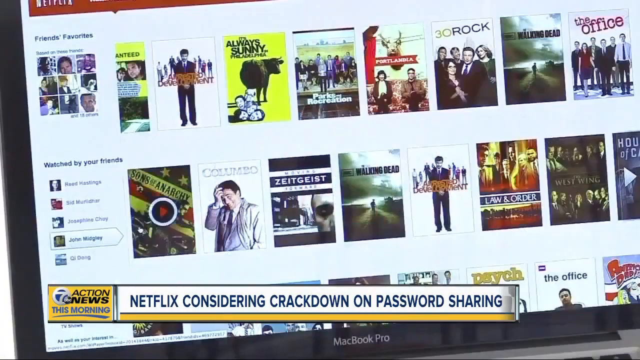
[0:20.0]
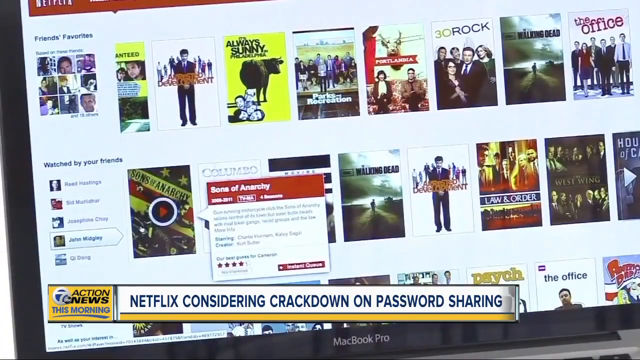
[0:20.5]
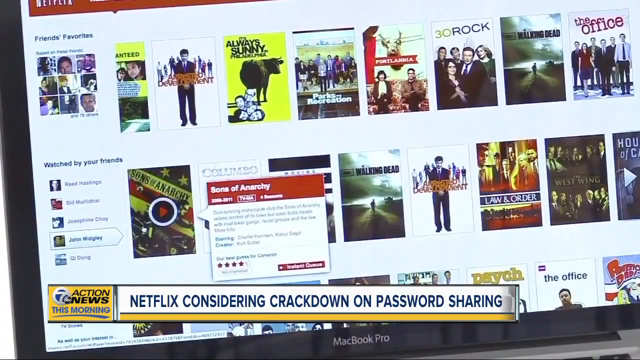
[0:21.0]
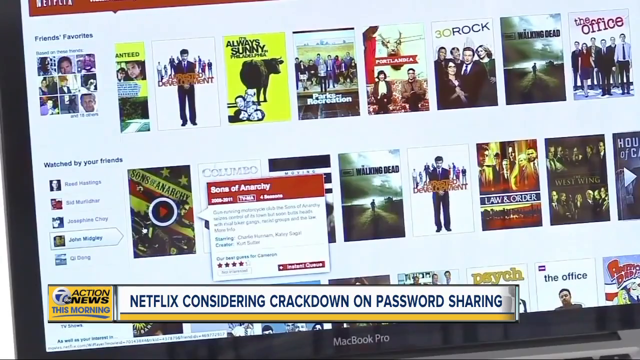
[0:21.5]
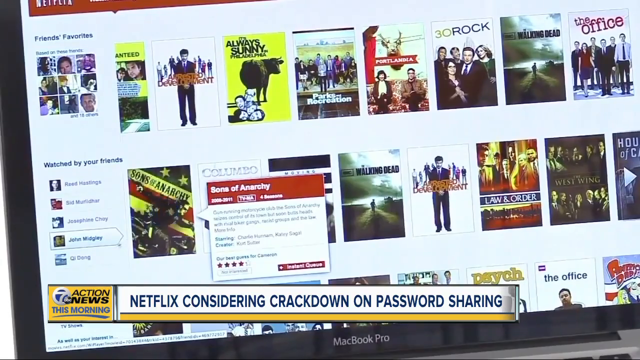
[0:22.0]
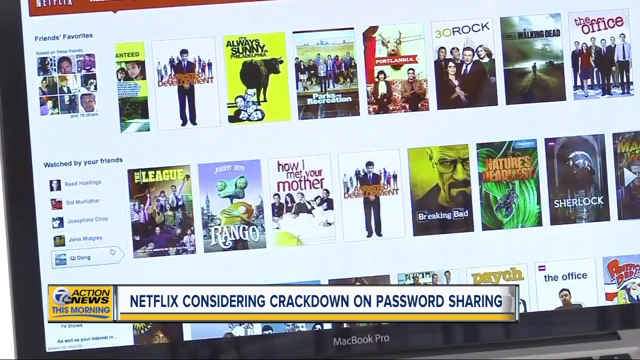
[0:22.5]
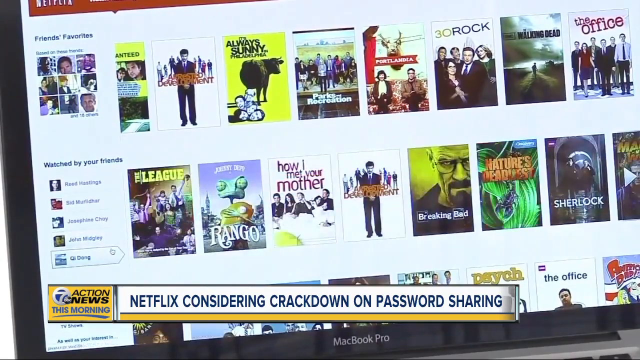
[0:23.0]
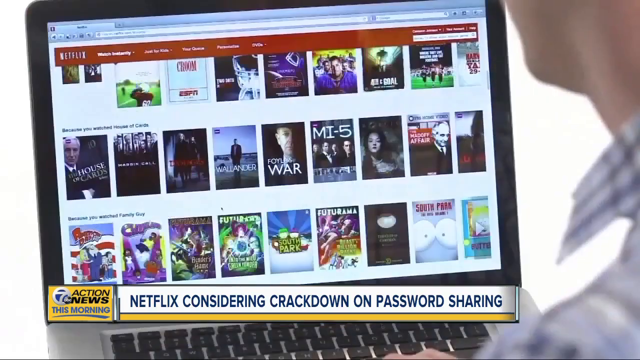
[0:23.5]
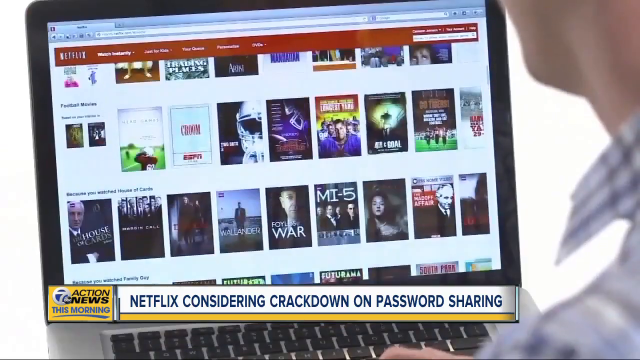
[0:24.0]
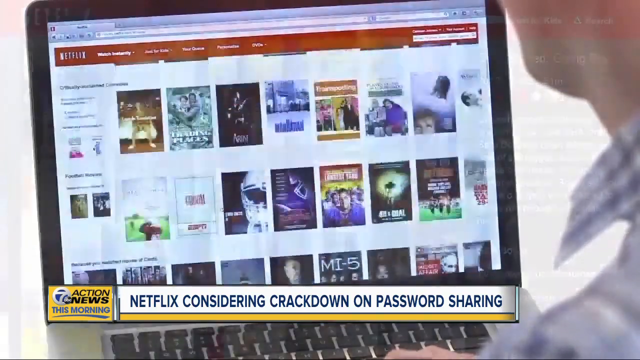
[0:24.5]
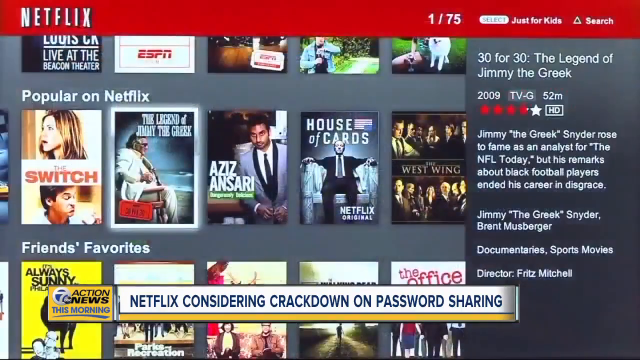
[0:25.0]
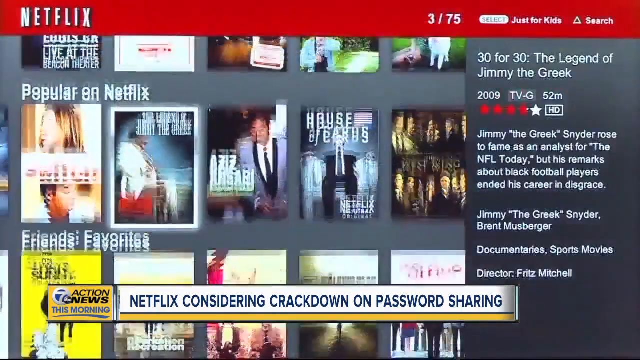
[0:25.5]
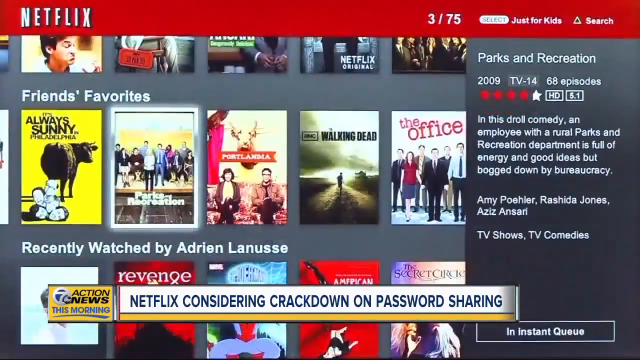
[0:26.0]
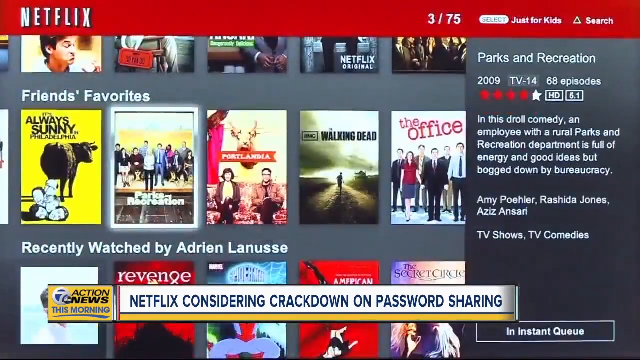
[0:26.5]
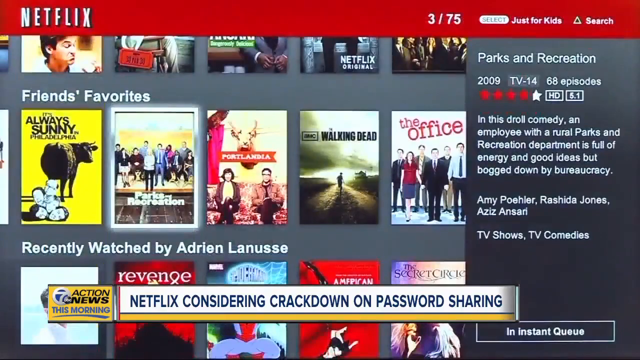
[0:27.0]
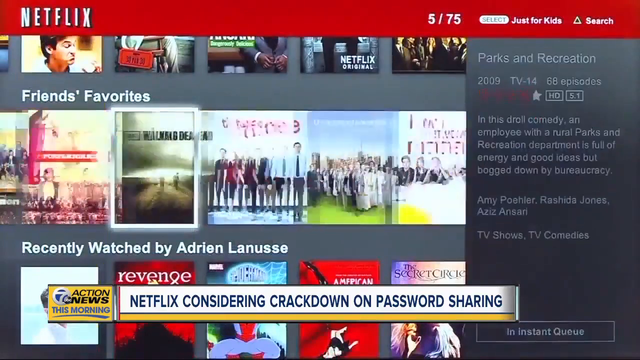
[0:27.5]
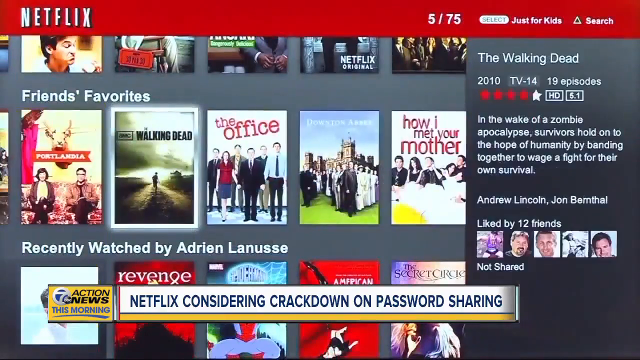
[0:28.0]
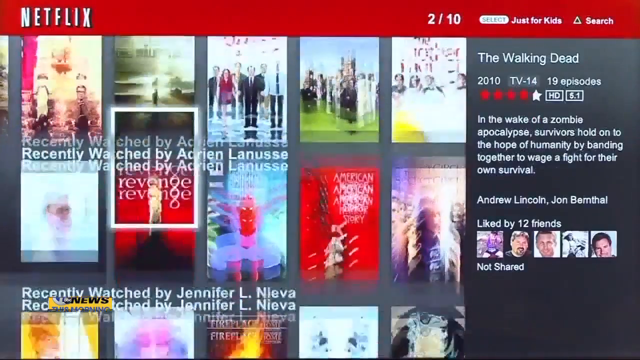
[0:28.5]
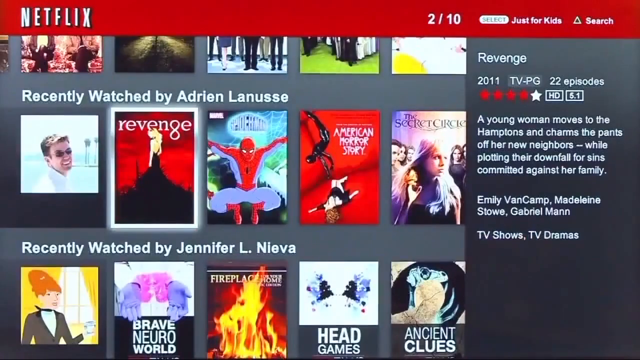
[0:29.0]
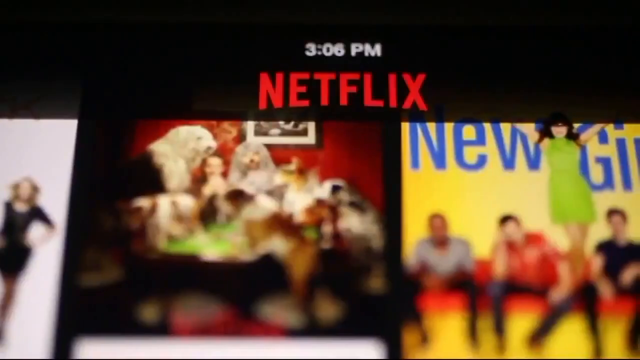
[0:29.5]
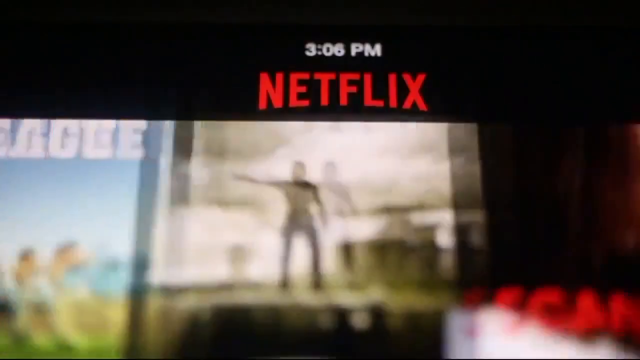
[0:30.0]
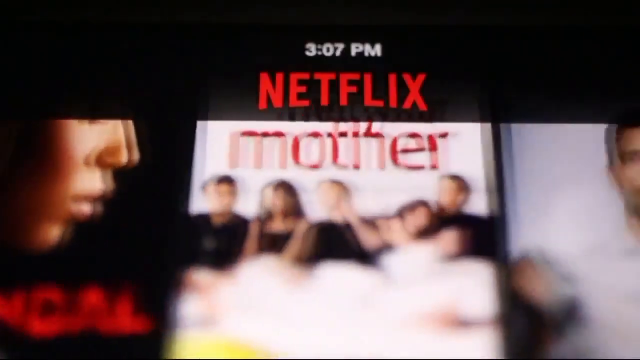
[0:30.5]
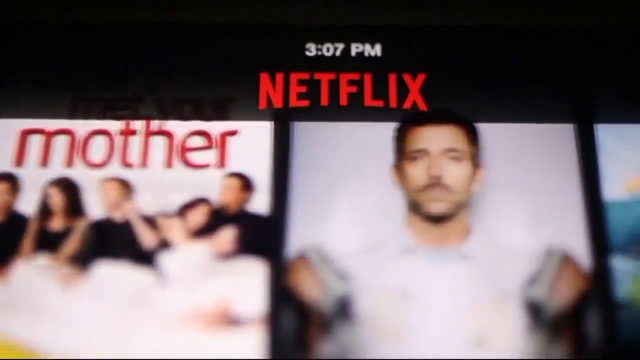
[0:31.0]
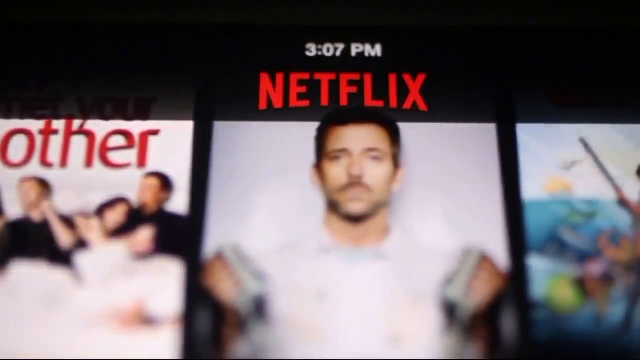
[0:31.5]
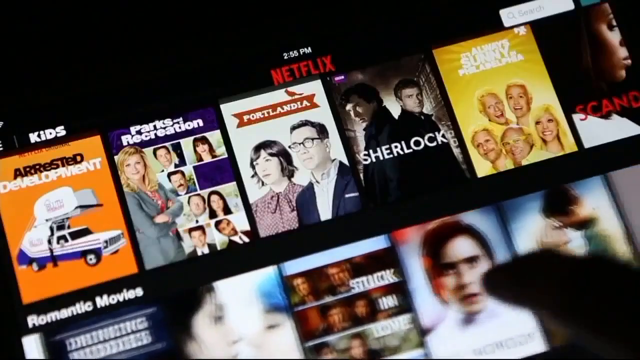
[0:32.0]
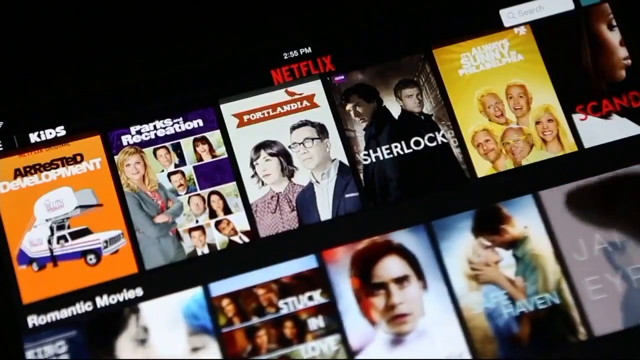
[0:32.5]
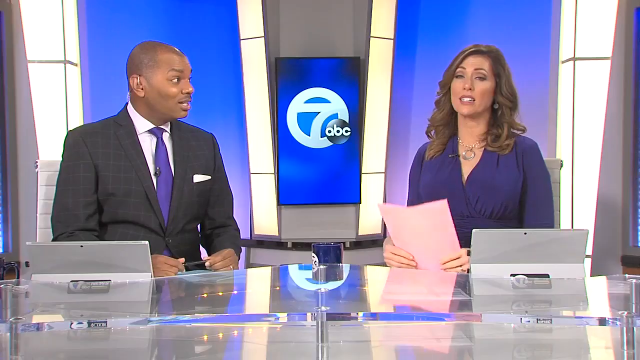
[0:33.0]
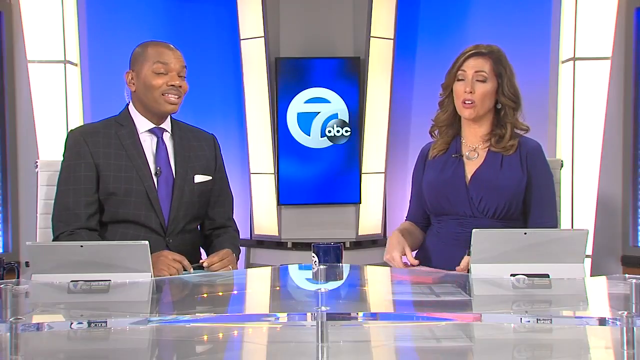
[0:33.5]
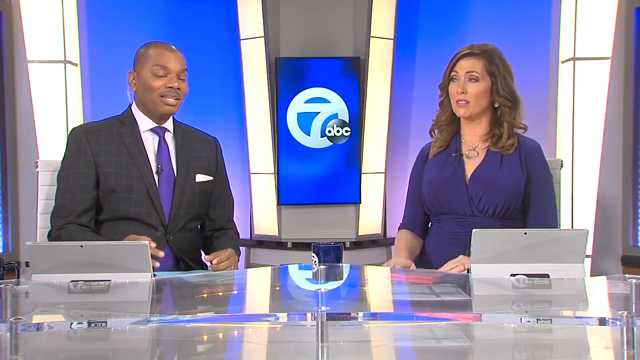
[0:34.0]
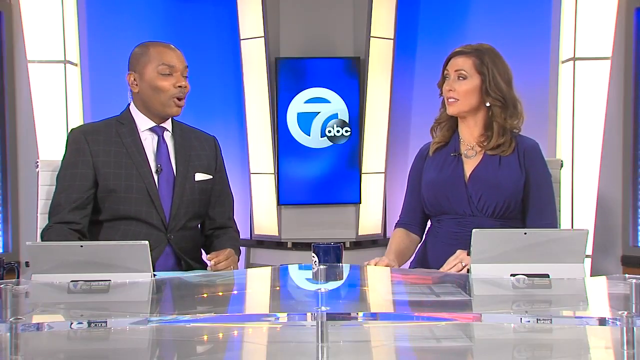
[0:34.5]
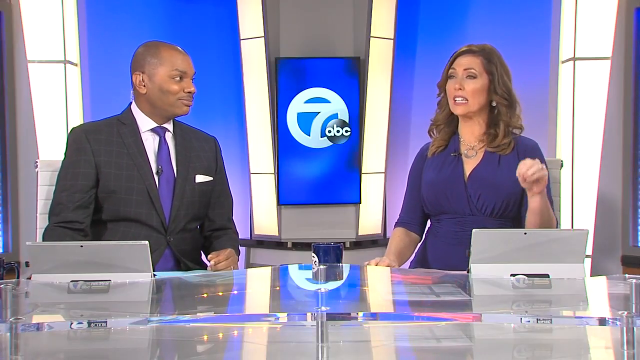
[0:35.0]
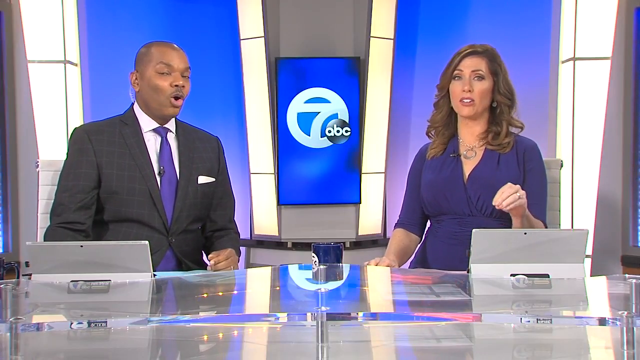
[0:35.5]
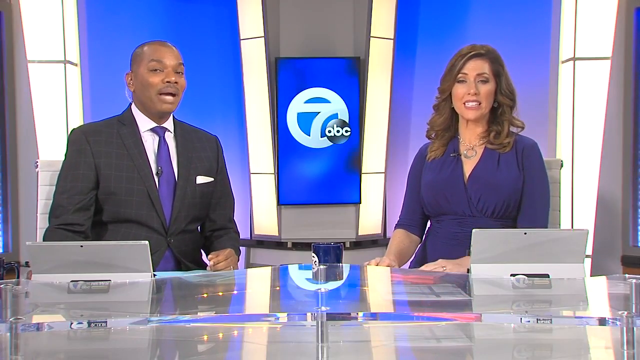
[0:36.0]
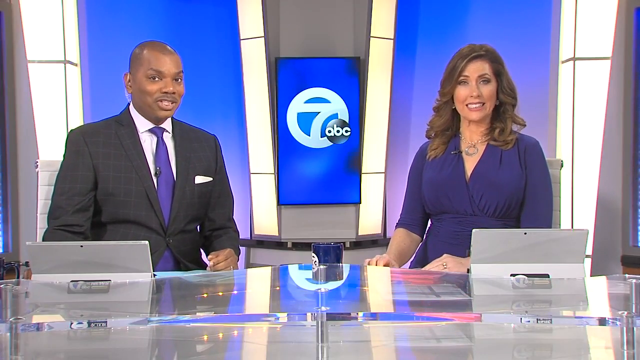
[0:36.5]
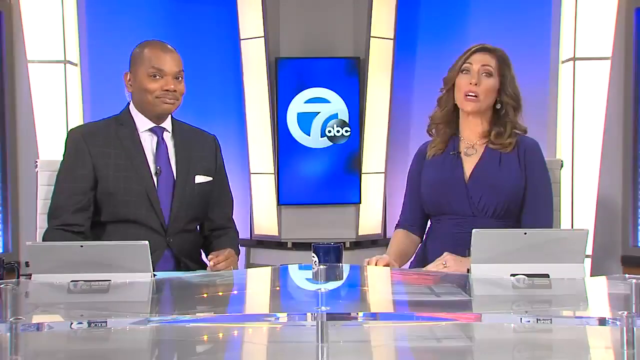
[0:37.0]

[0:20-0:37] A scene that looks to be a news broadcast shows the title "Netflix Considering Crackdown on Password Sharing," broadcast by ABC7 Action News. Netflix titles are scrolled through on a computer by a person. An older Netflix edition follows, where the user scrolls through famous Netflix titles including Spider-Man, Revenge and The Office. The scrolling continues through various Netflix titles, mainly famous movies, including Arrested Development. The video then transitions back into the studio with two newscasters: a bald man of African descent with a shaven head, wearing a black suit, a blue tie and a white shirt, and a Caucasian woman, presumably in her 40s, wearing a heavy purple dress. The channel is ABC 7.